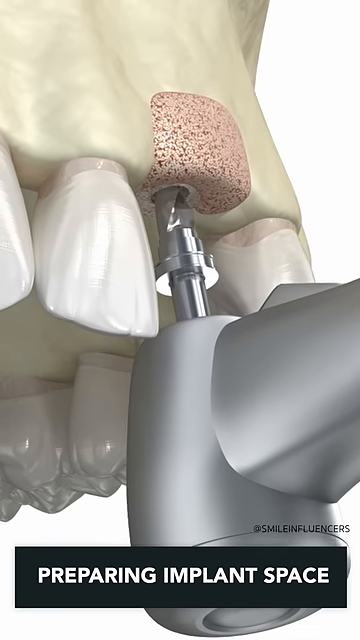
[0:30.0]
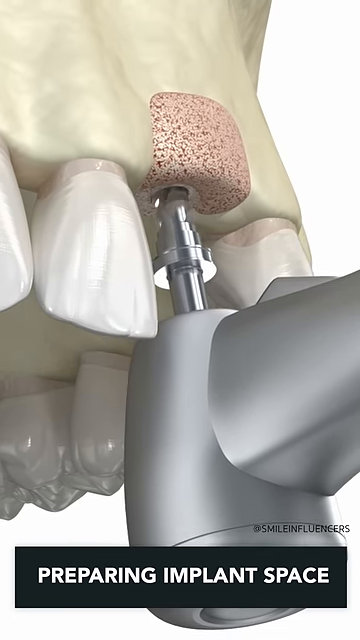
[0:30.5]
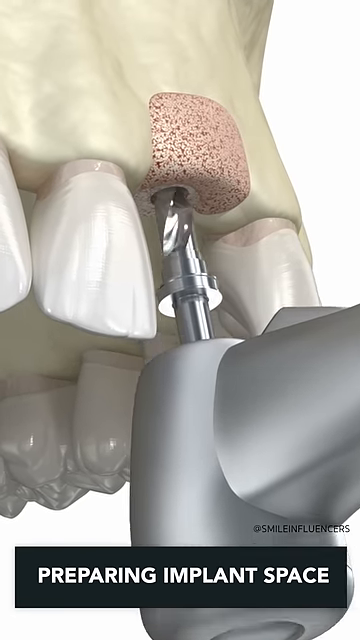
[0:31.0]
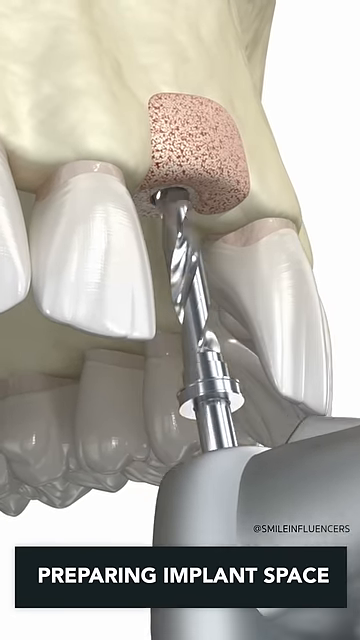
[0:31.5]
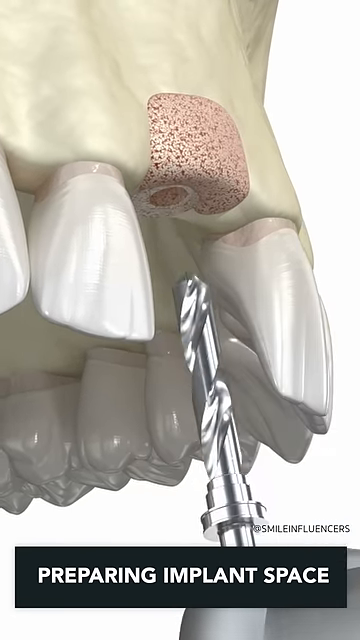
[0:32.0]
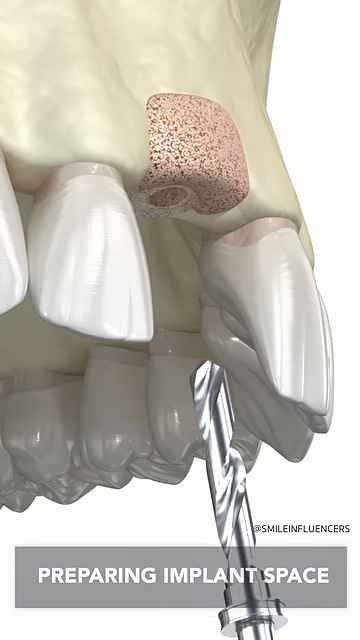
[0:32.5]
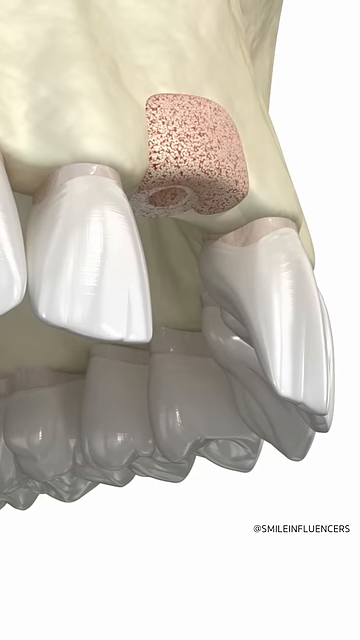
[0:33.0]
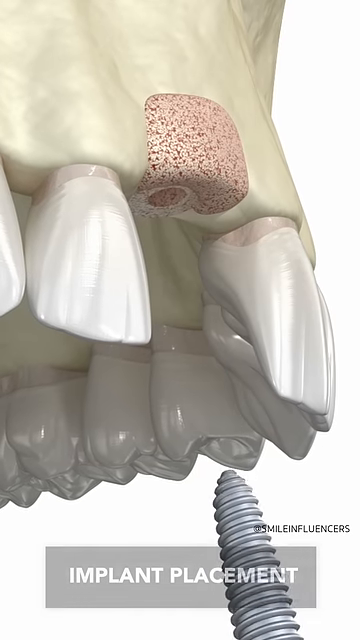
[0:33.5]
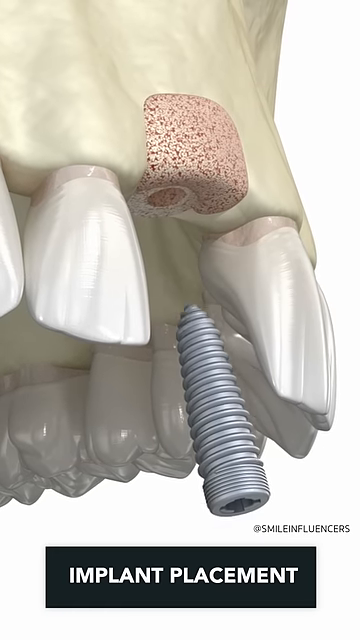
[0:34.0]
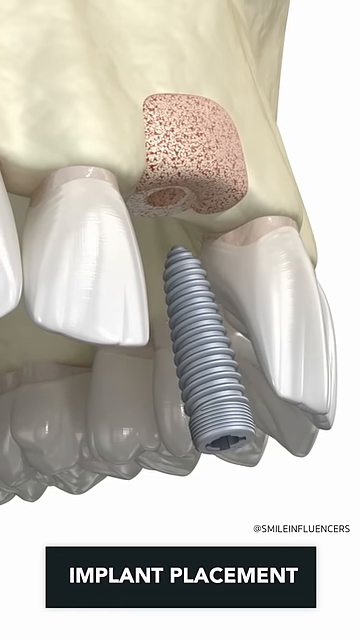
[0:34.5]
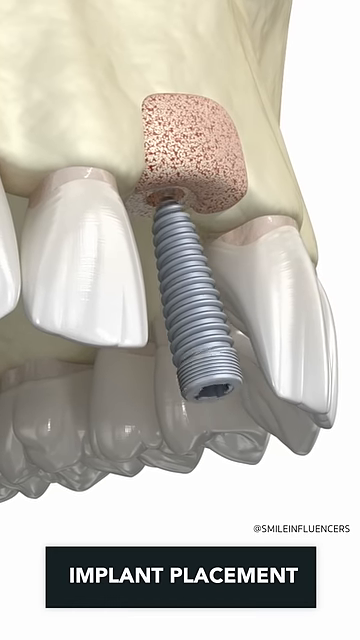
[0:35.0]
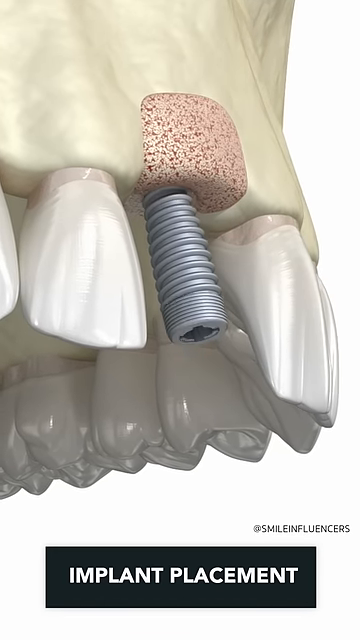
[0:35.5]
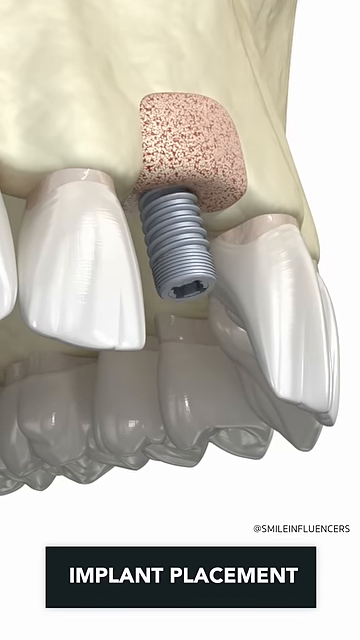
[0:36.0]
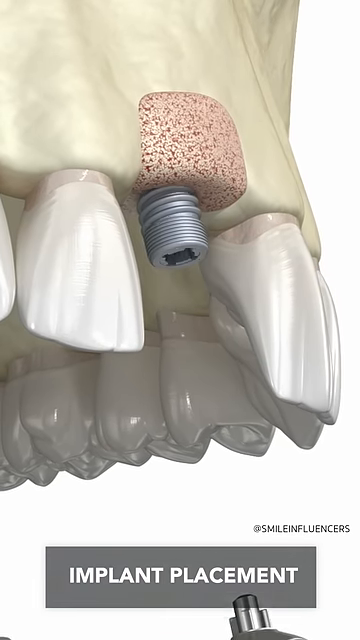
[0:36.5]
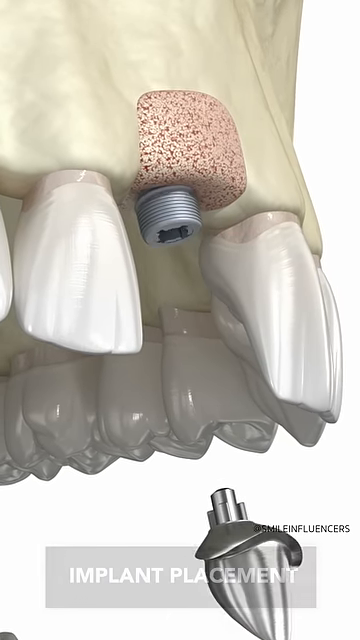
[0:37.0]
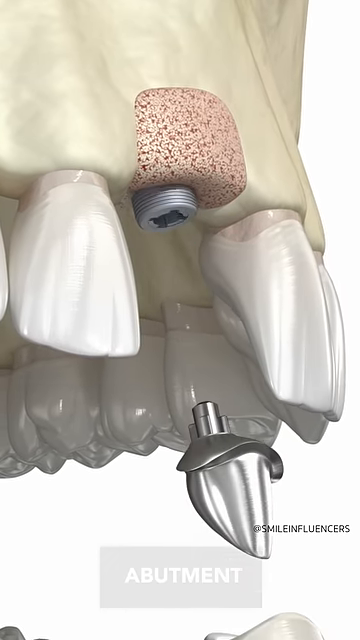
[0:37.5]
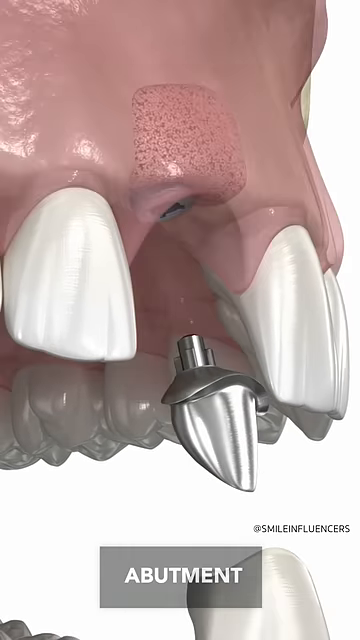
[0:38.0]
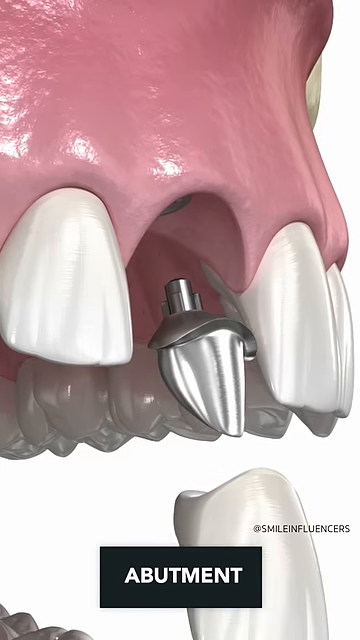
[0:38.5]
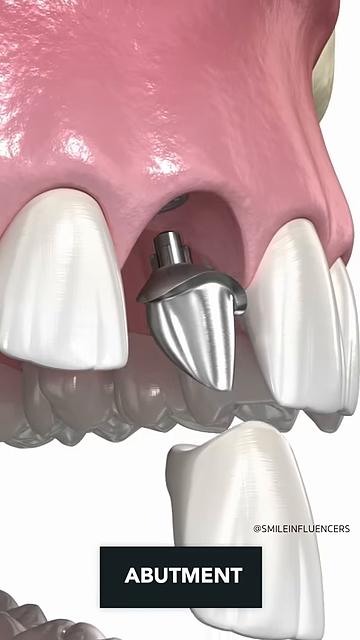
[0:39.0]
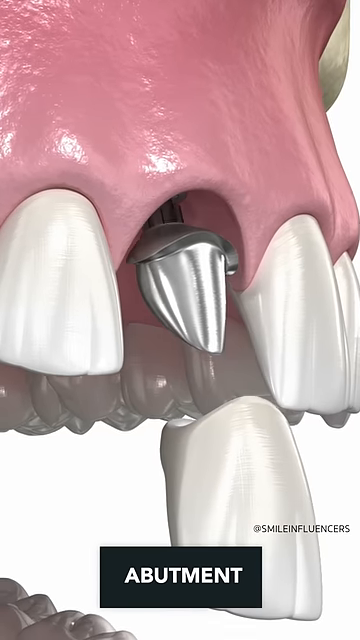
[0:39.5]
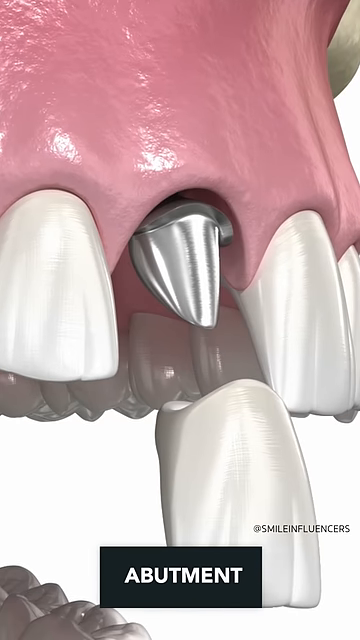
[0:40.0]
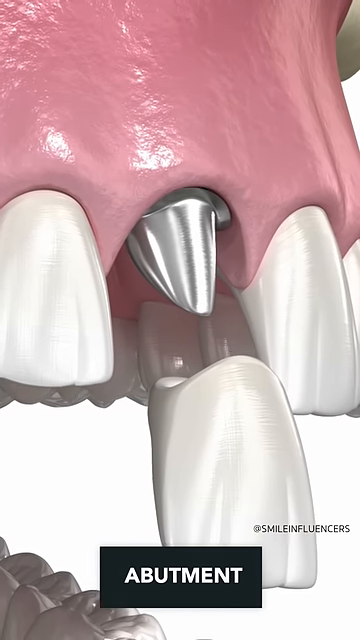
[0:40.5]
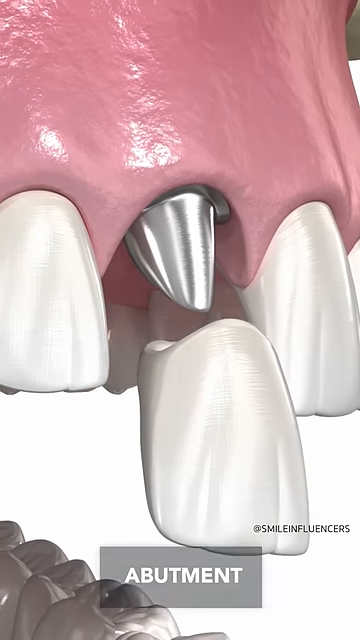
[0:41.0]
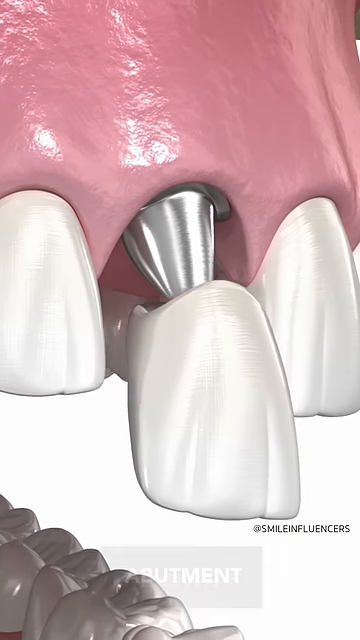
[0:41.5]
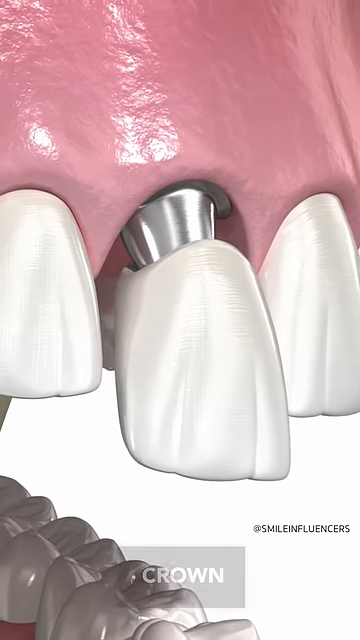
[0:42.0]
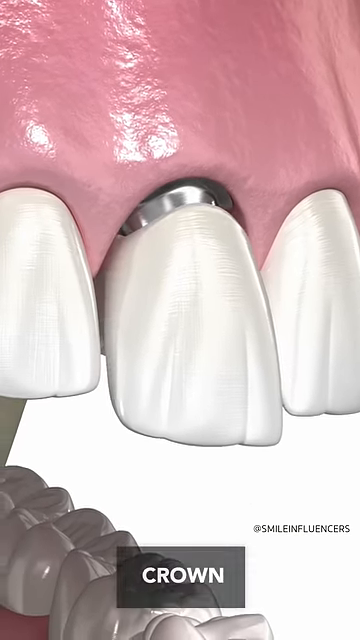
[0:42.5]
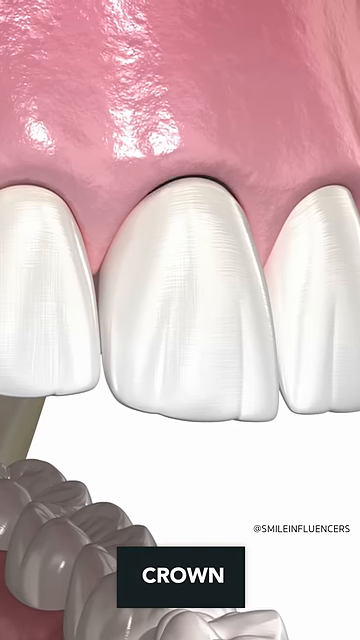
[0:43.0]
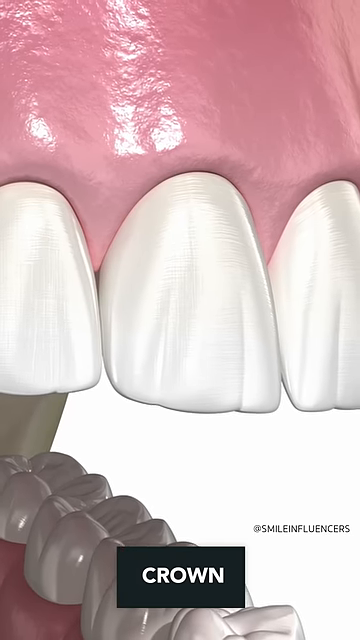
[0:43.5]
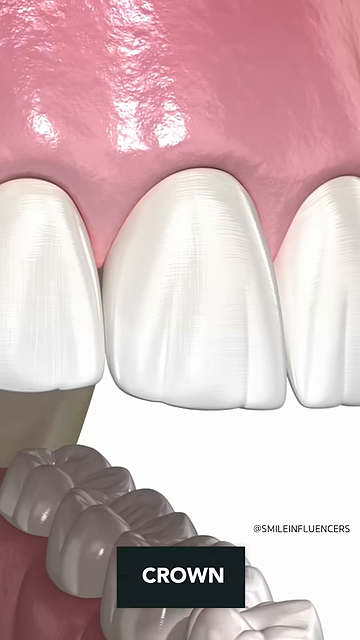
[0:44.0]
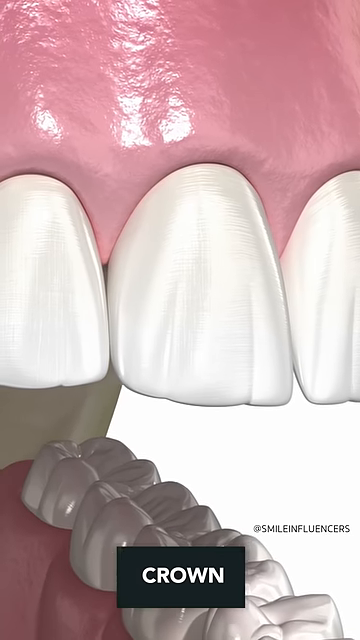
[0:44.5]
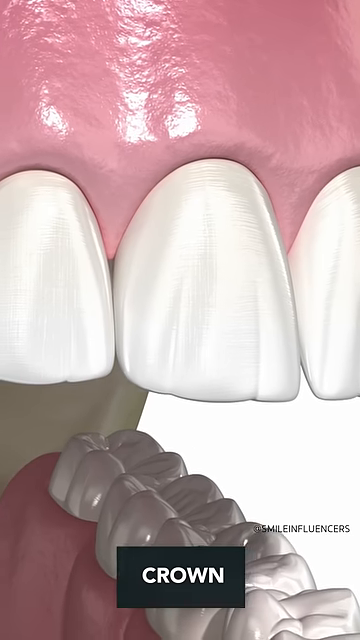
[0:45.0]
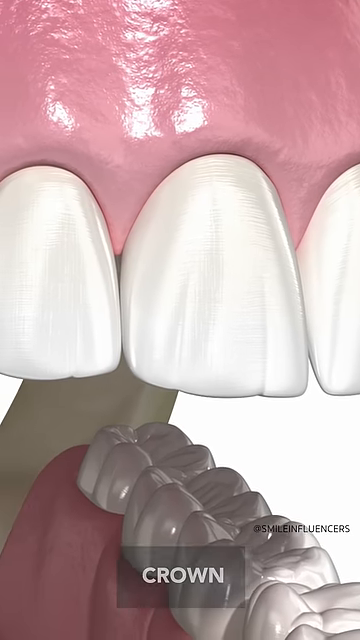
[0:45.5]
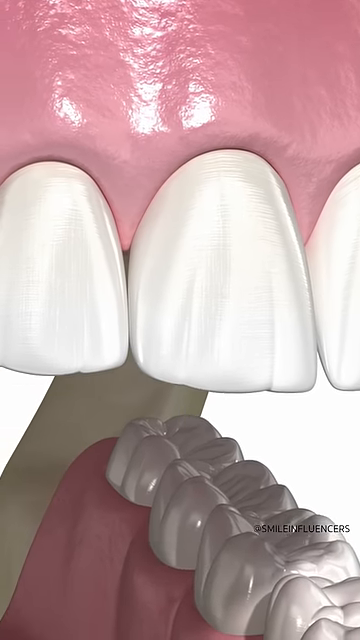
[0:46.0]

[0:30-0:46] This medical video shows how a person's mouth is prepared for a tooth implant, in a close-up of a digital human skull and teeth rather than a real person. Dental material has been placed into the hole left by a missing tooth, and a dental drill is preparing the hole. A black banner at the bottom reads "Preparing implant space," with a copyright sign and the word "Smile Influencer" right next to it. After the drill finishes, an implant is placed into the hole, which a banner at the bottom identifies as implant placement. Soon after, a metal material is put into the hole, and a banner at the bottom identifies it as an abutment. Then the crown is placed onto the abutment.